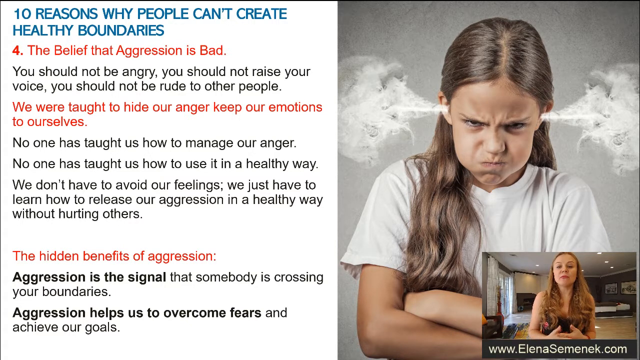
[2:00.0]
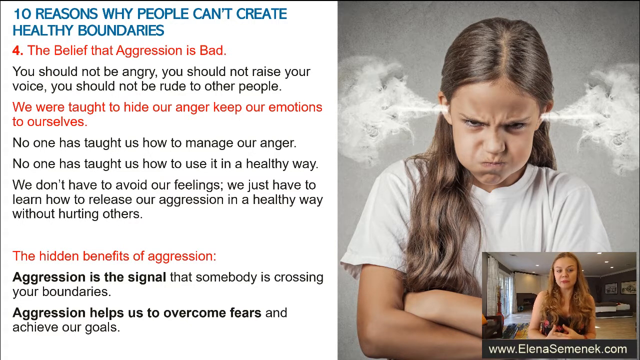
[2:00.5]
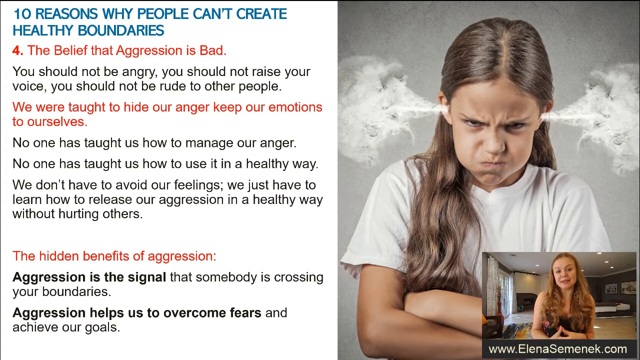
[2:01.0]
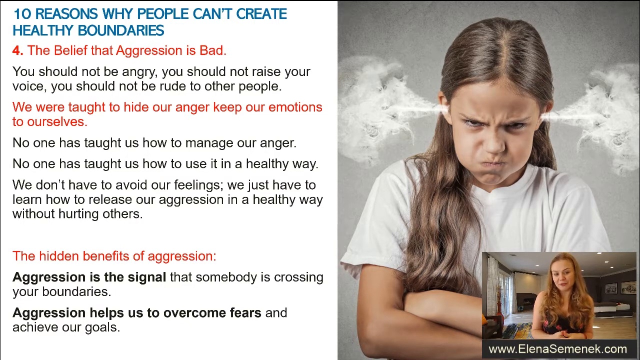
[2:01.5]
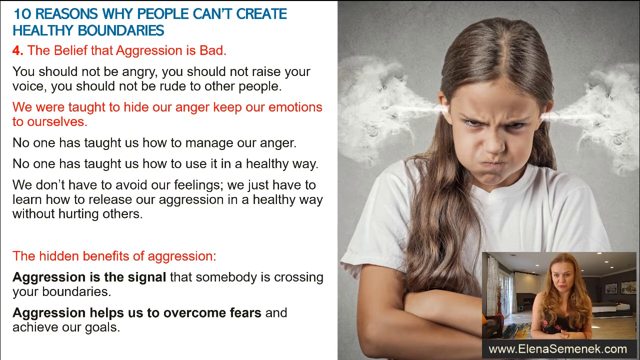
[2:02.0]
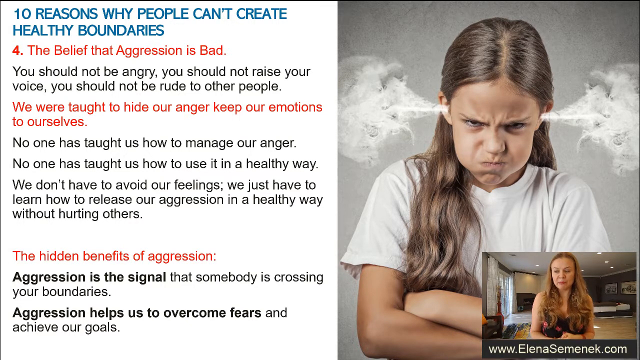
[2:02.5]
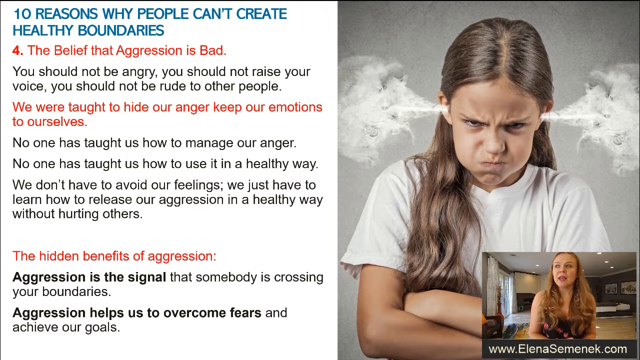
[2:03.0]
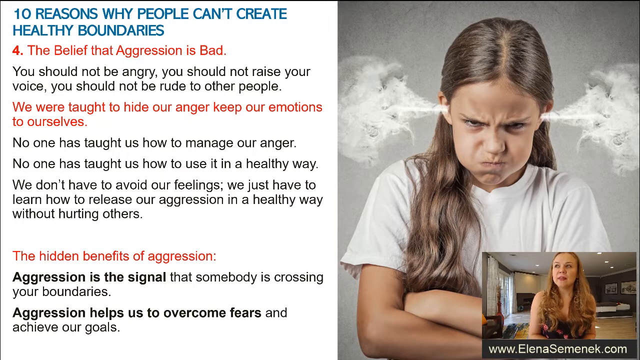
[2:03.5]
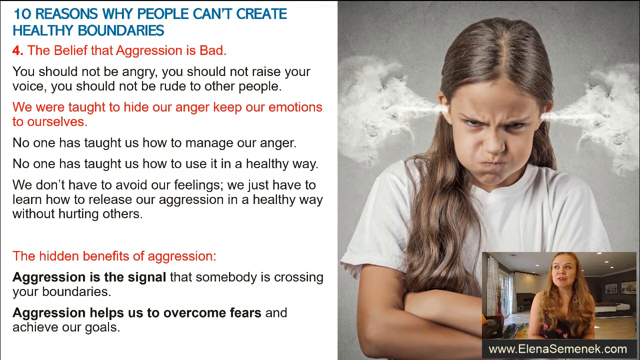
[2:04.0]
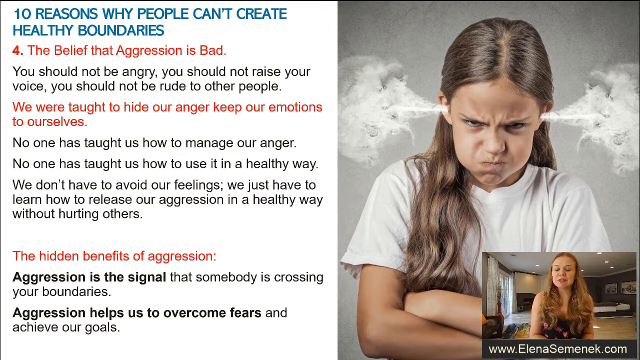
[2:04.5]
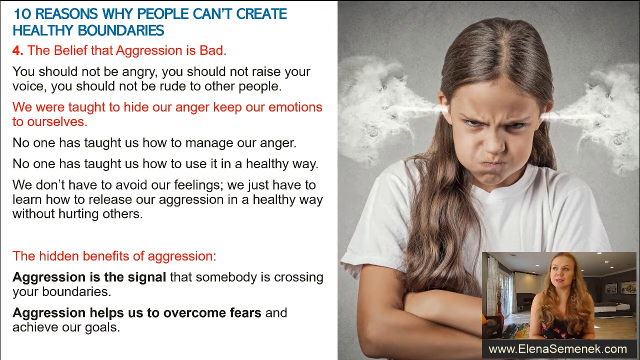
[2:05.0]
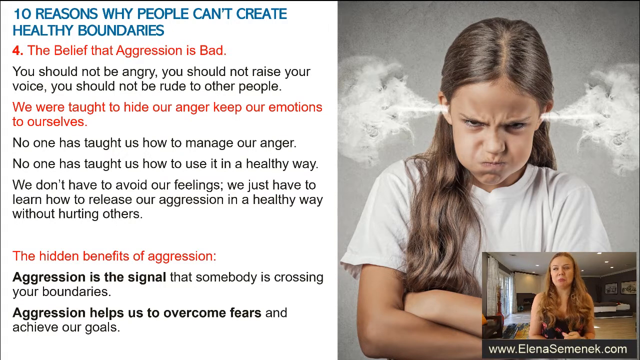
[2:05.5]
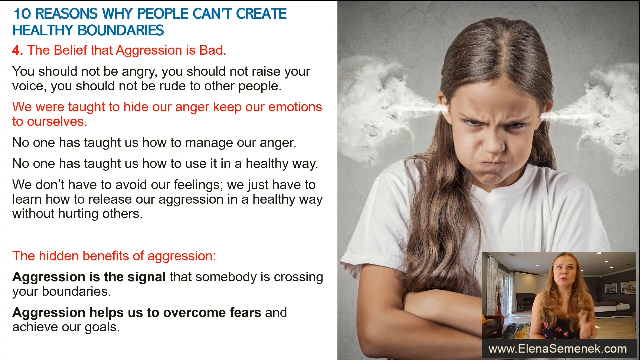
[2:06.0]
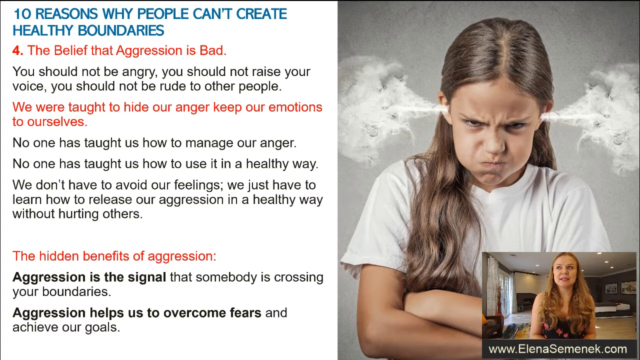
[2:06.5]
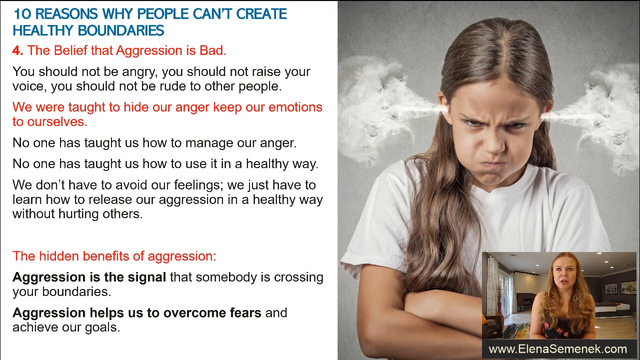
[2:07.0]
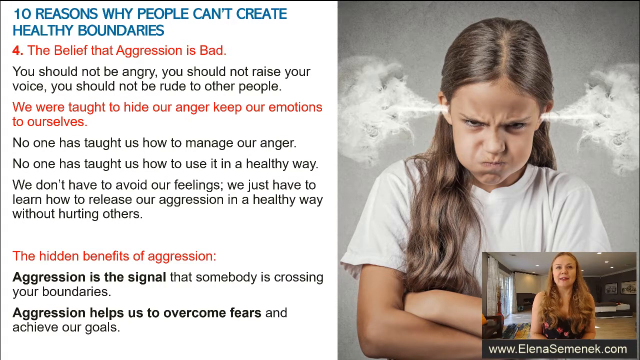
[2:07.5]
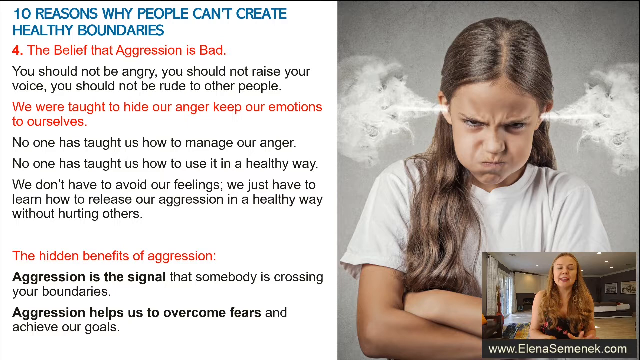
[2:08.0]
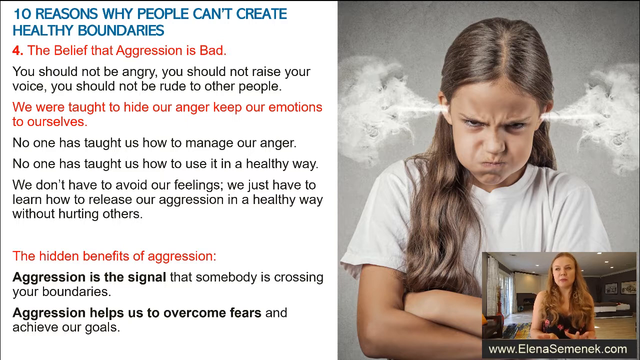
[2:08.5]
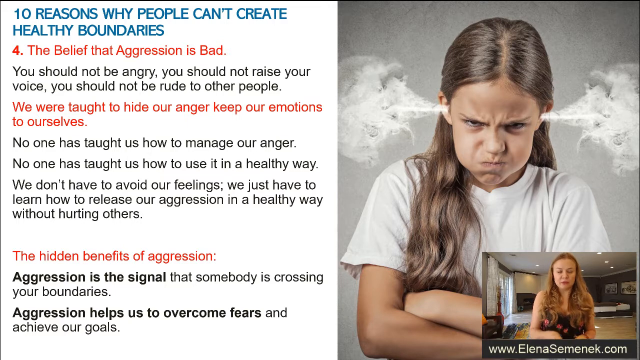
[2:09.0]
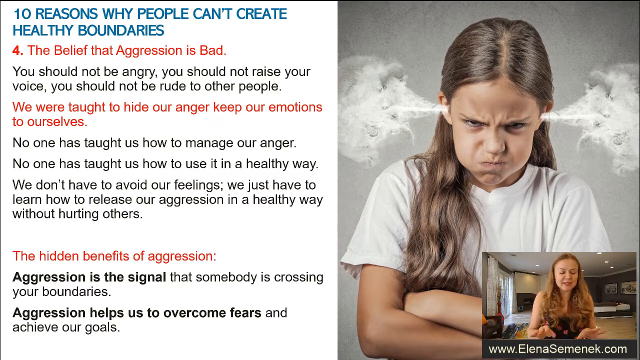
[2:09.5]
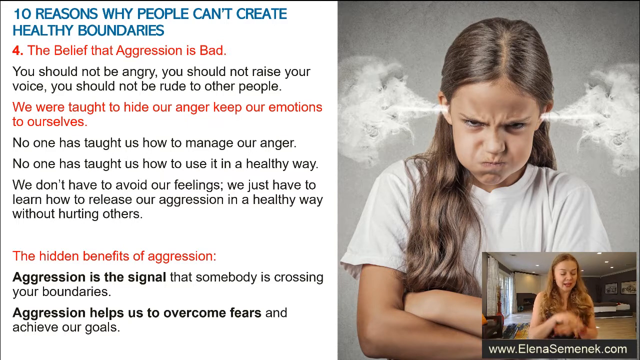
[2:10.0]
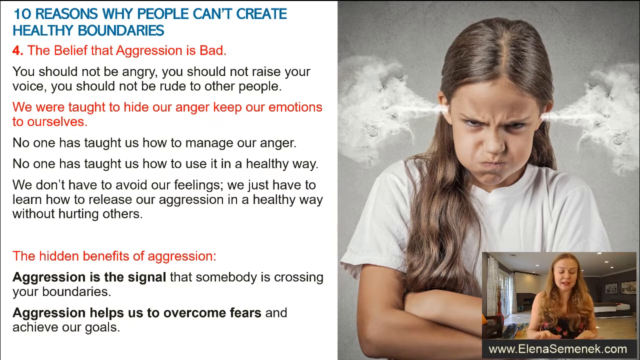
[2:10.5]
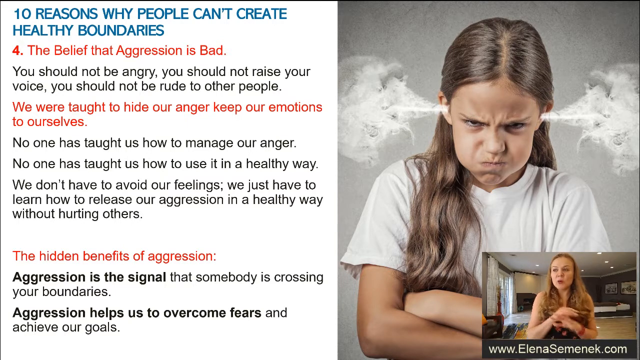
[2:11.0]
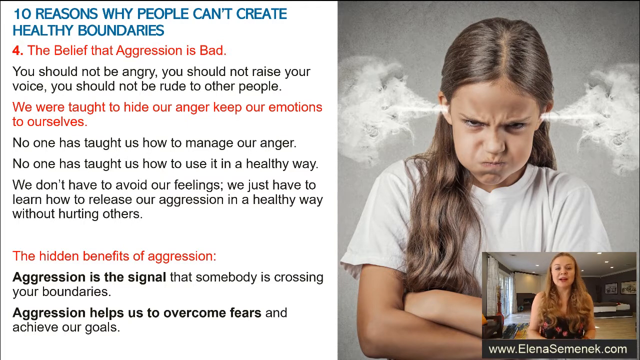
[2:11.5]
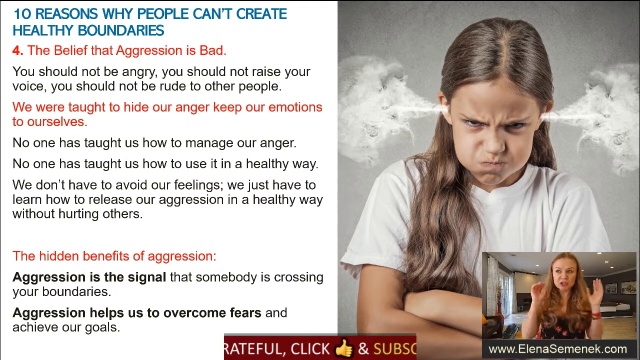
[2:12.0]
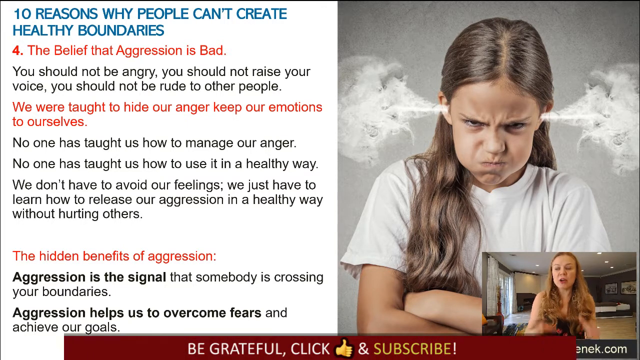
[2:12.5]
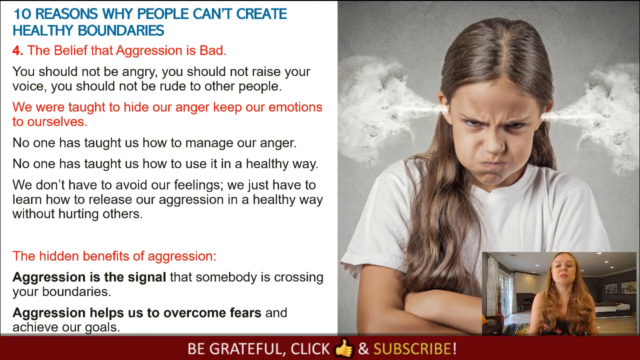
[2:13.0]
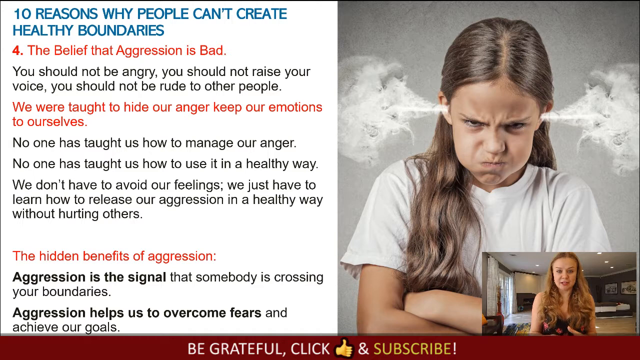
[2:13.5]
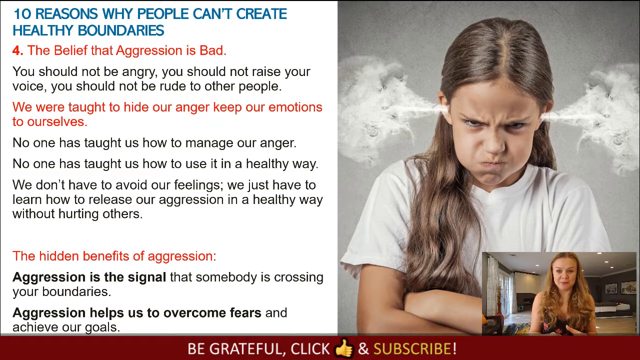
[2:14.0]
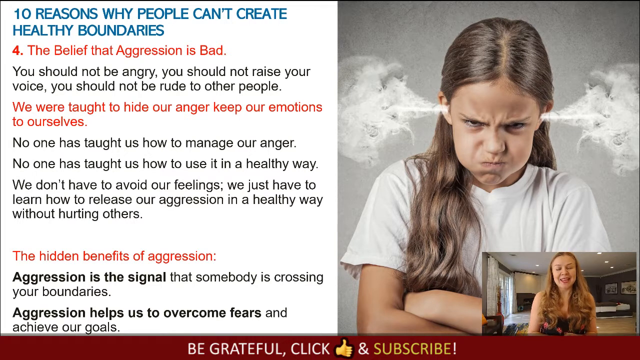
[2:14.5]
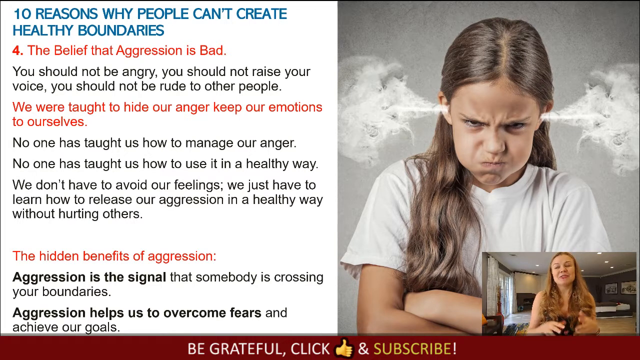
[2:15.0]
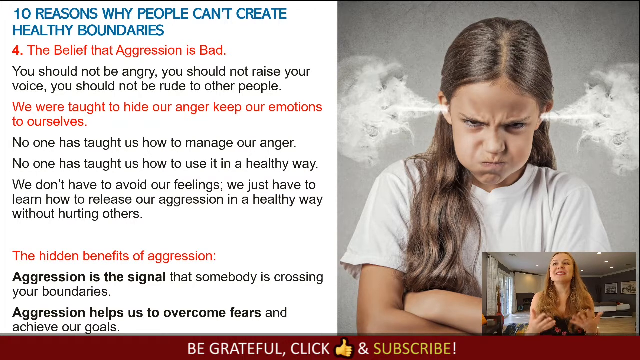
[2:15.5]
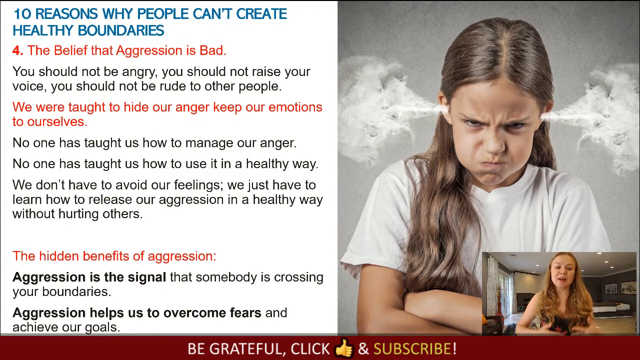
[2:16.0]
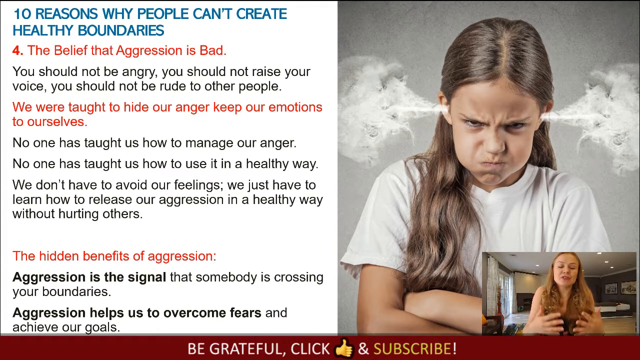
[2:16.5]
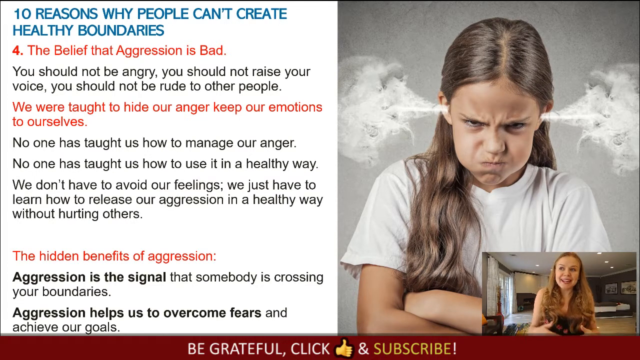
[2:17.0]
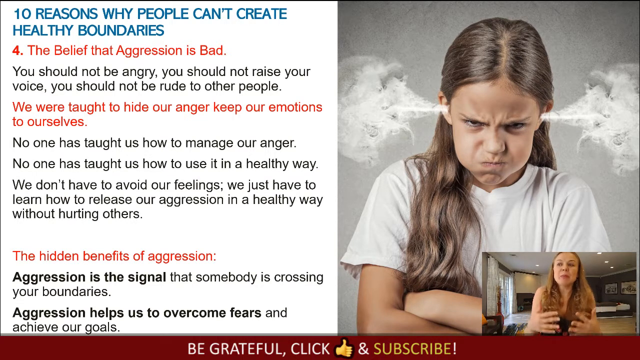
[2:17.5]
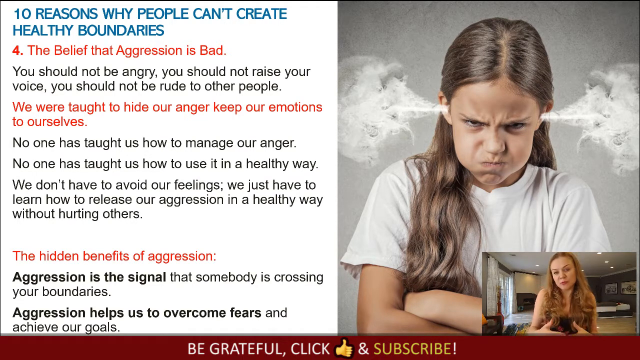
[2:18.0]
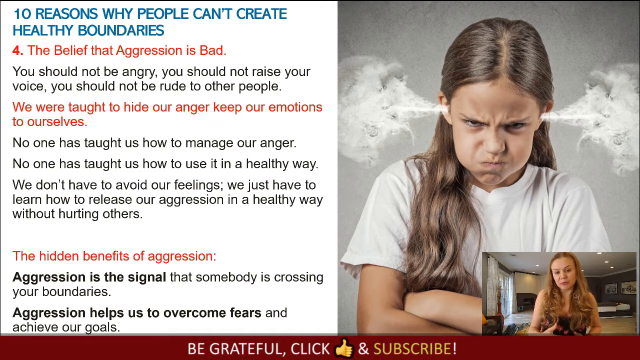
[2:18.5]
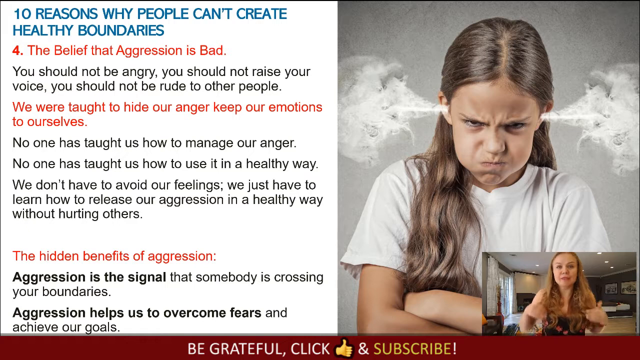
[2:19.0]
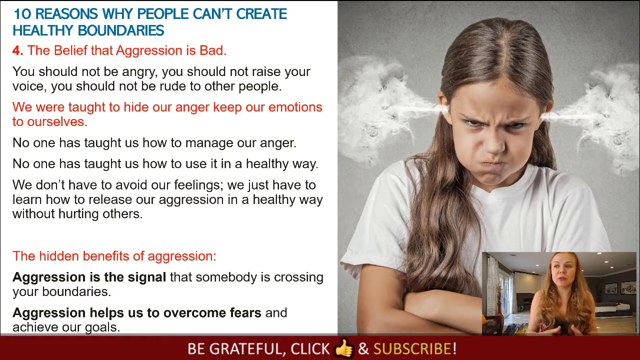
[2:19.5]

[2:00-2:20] The screen is split into left and right. On the left is the text that begins "10 reasons why people can't create boundaries". On the right is a young girl who looks very angry, with long brown hair parted in the centre, possibly in pigtails. Steam is coming out of her ears; she wears a white t-shirt and her arms are folded. In the bottom right corner a woman narrates the video. At first her arms are down by her side, then her left hand starts to move in a kind of pointing, emphasising gesture. She brings her hand to herself, as if to say "I believe". Her right hand comes up, with just the fingers visible pointing upwards, then her left hand is used, and then both hands together. A web address, "www.elenasemanek.com", appears. Her hands mostly work in unison and in the same rhythm as her speech and face movements. She steeples her fingers for a moment, then moves her hands together up and down and in kind of circles, as if to emphasise a list of things she is saying. She continues with various hand gestures; at one point both her thumbs are up. Text then appears across the bottom of the screen: "be grateful, click and subscribe".